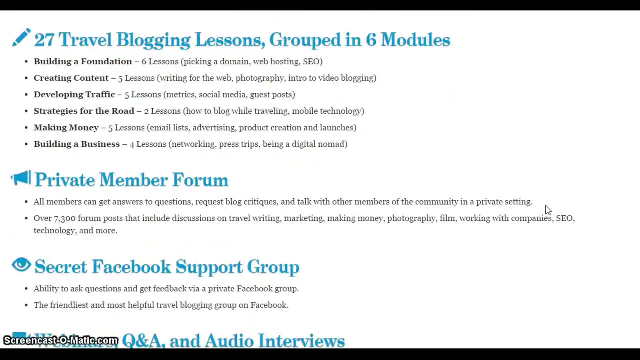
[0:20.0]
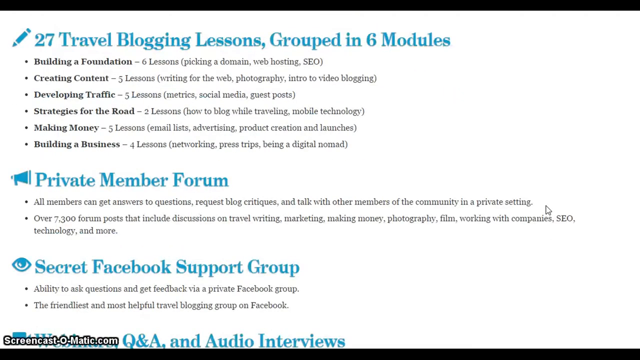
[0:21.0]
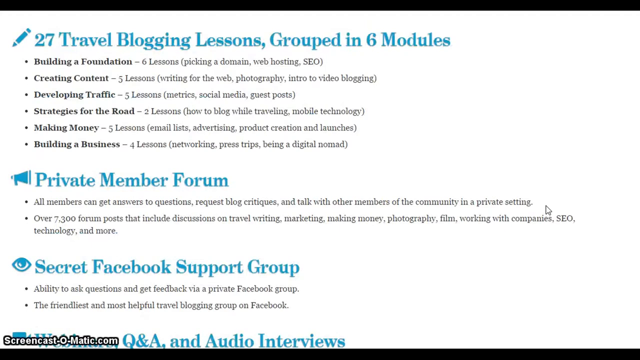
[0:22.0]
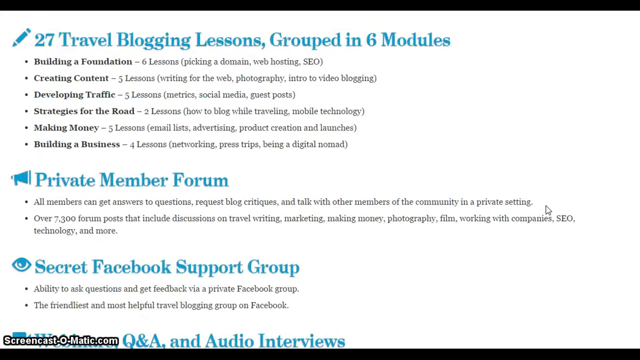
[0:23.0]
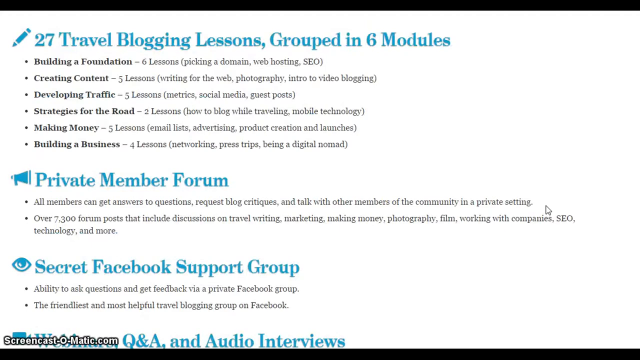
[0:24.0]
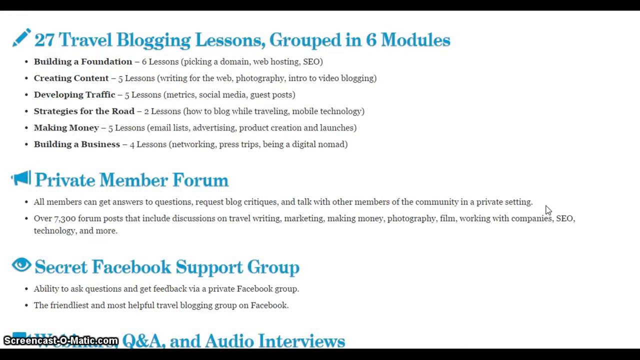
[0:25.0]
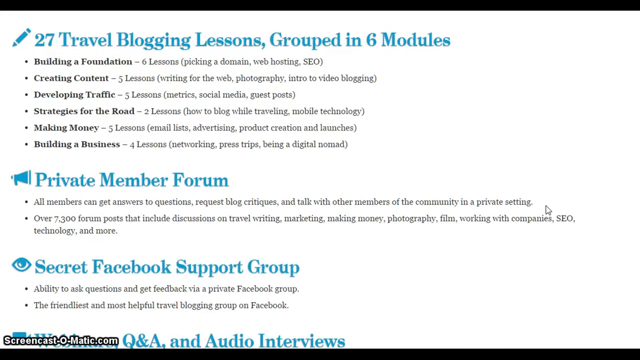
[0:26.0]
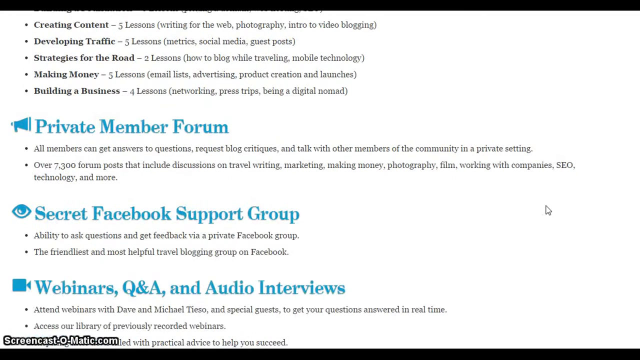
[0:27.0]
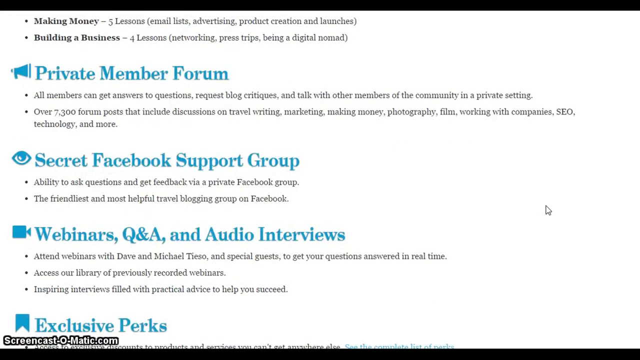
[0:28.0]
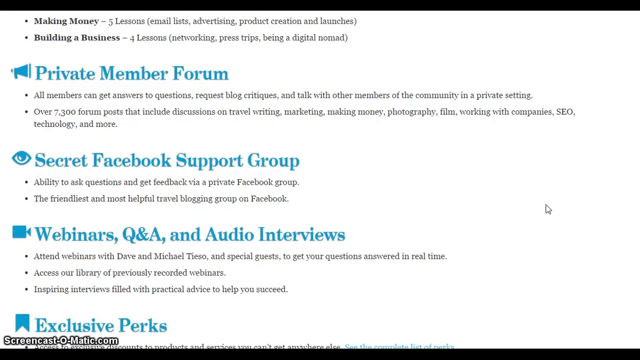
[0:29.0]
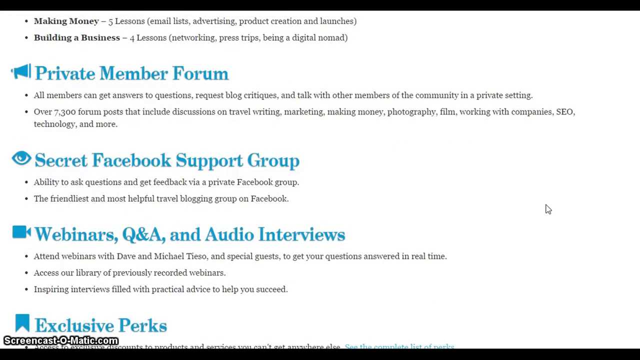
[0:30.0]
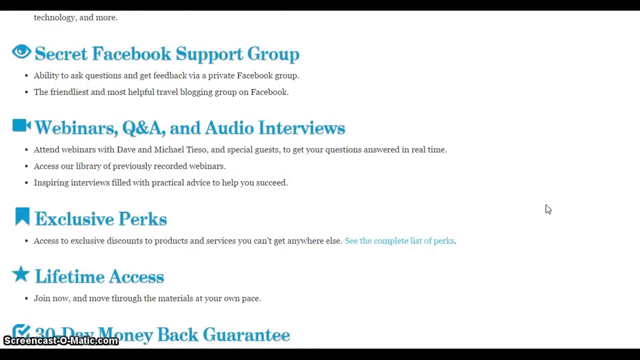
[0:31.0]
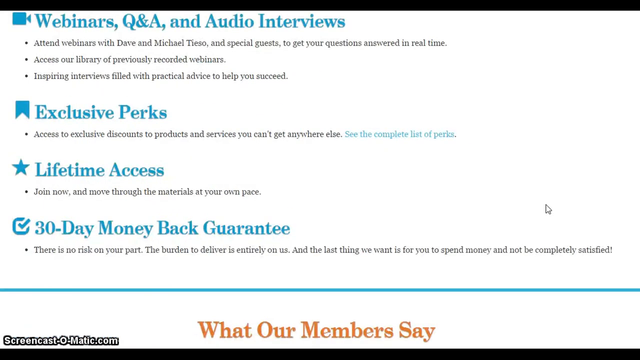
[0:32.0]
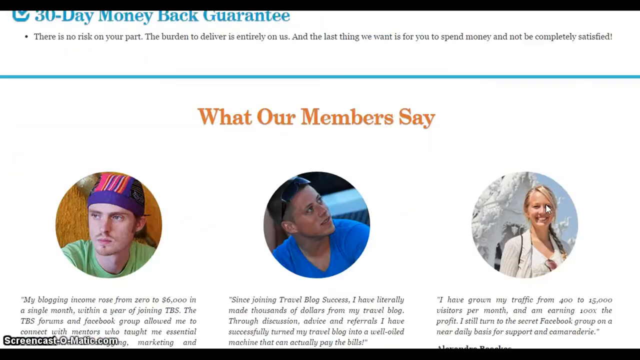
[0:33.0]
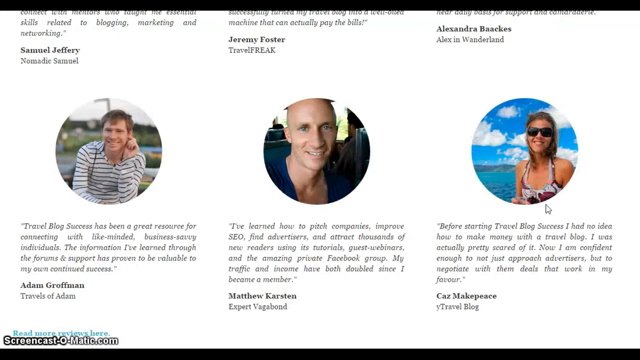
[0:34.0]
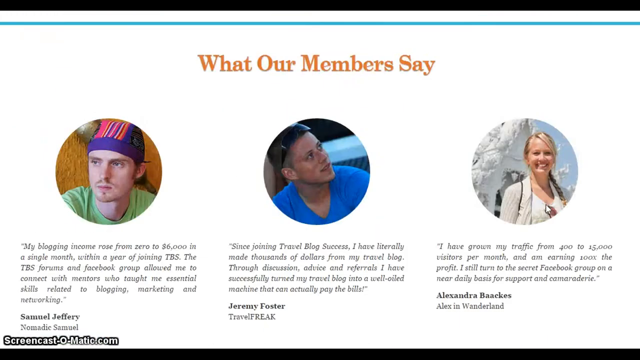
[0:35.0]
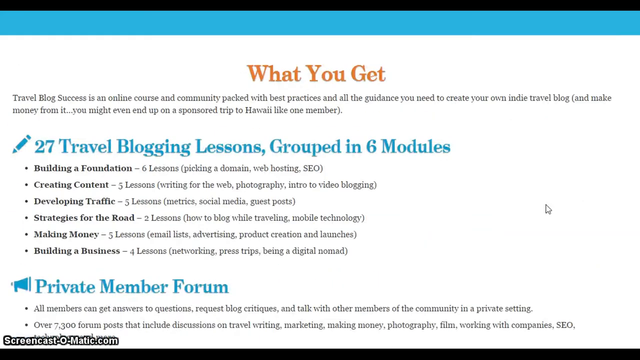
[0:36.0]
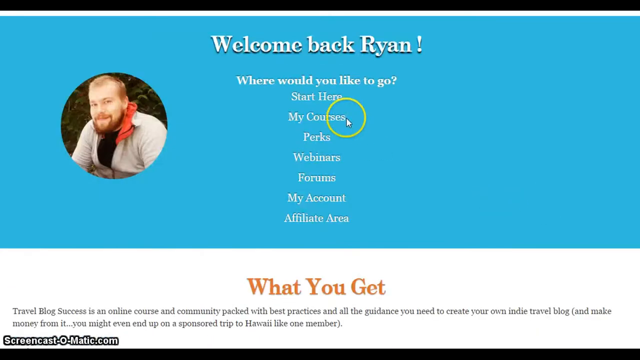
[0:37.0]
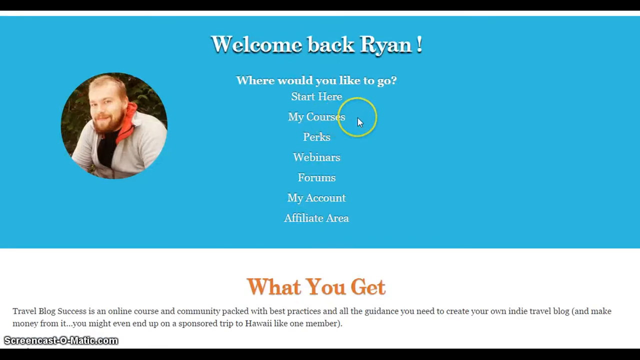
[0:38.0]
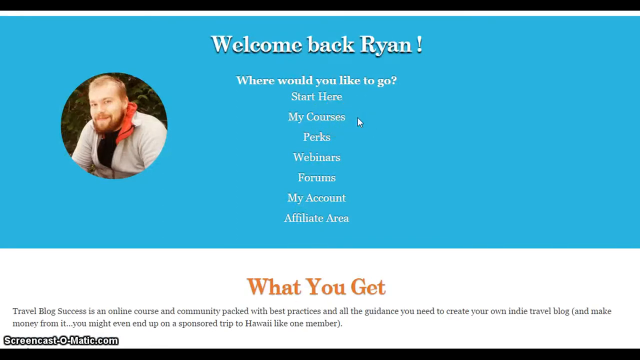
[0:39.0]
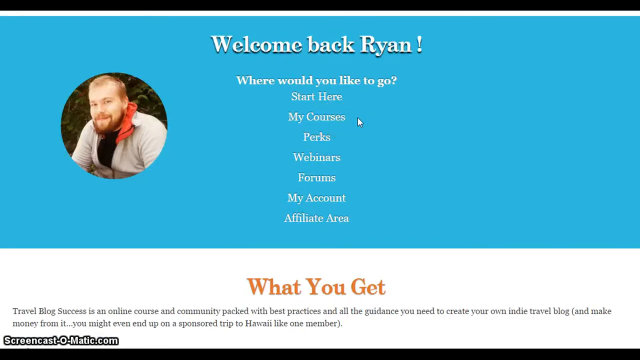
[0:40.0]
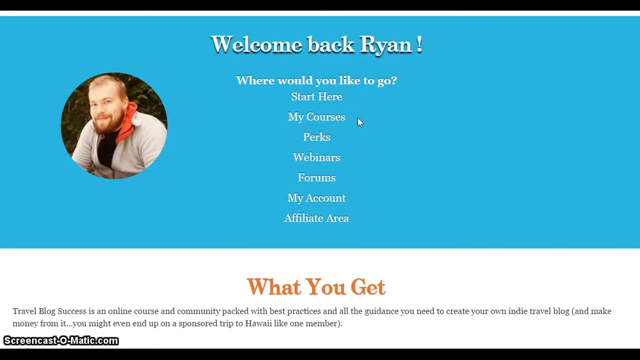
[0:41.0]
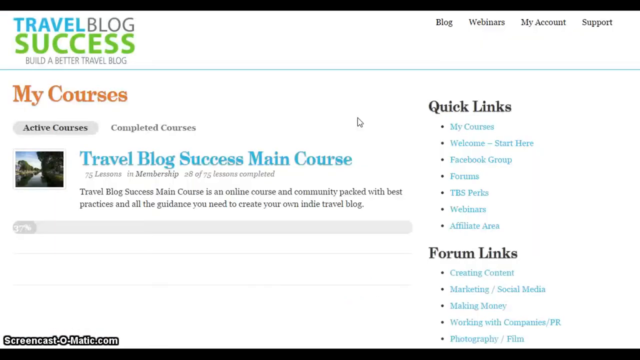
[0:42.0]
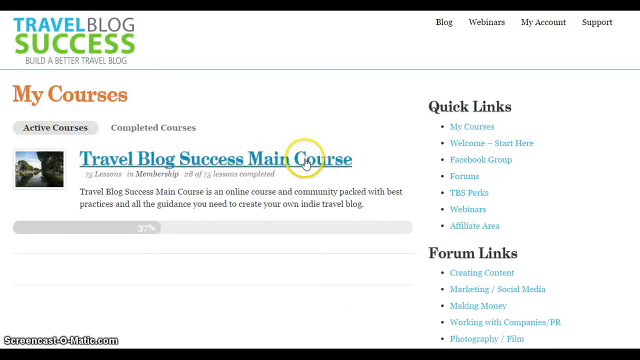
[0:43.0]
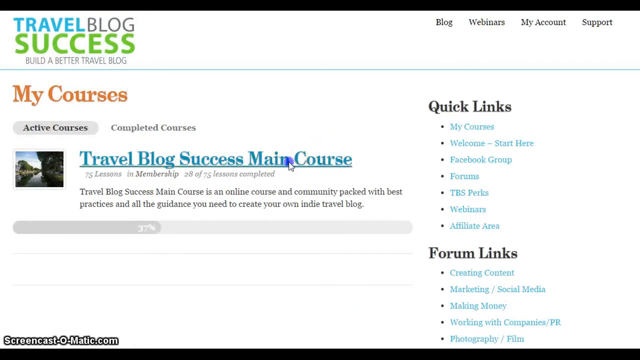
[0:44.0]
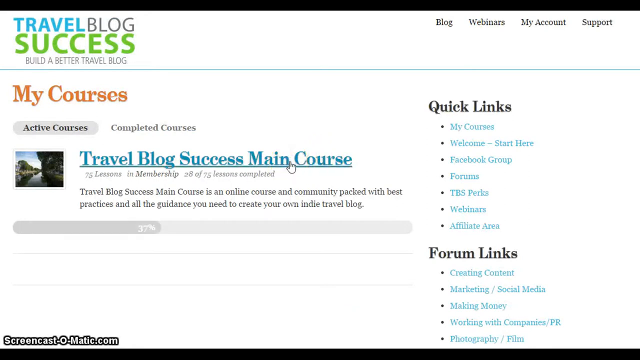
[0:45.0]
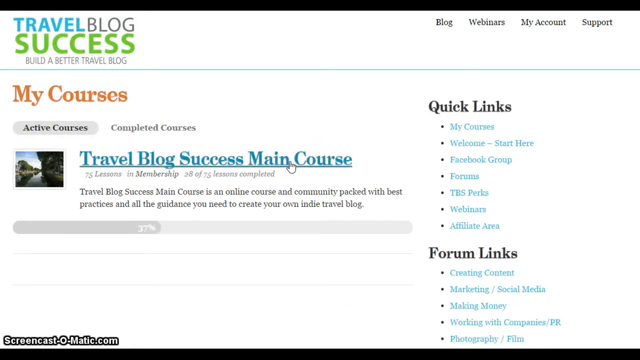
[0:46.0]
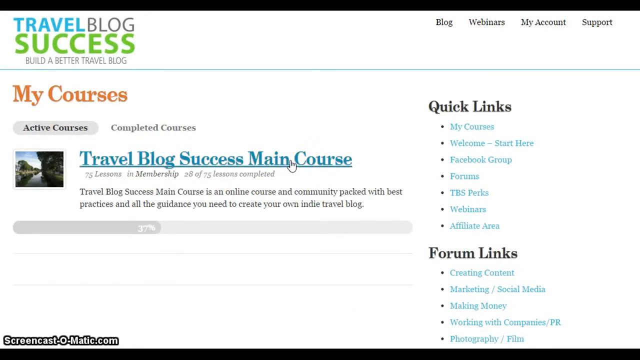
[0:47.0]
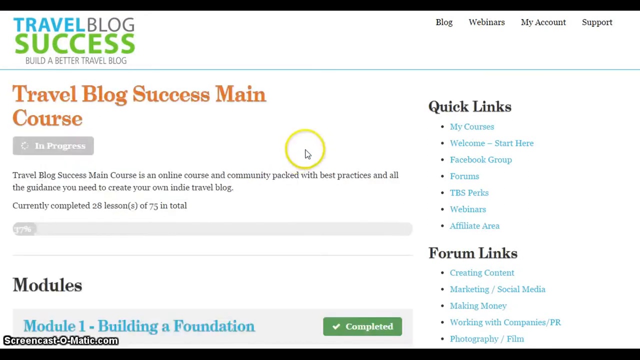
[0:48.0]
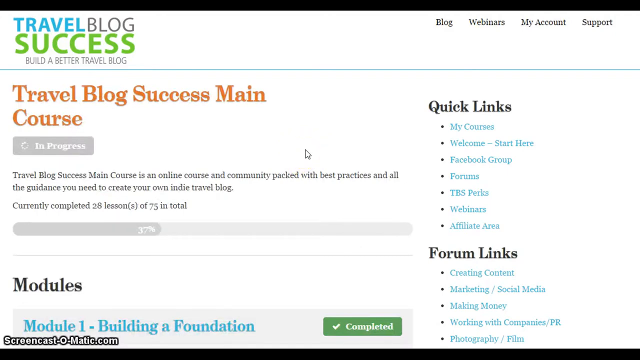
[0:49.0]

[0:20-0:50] The section begins with "27 travel blog lessons grouped in six modules", with a little pencil at the top next to that heading. The modules listed are building a foundation, creating content, developing traffic, strategies for the road, making money, and building a business. Everything is written in a teal color. Below that section is a private member forum, with a megaphone to its left, stating that all members get answers to questions and can request blog critiques. Next is the secret Facebook support group, with a picture of an eye to its left. After that comes the webinar Q&A, with text reading "and audio". The next section is travel blog success, reading "the main course travel blog success". This leads to a page with a bunch of pictures of members making comments, possibly member testimonials, with each face in a little circle.